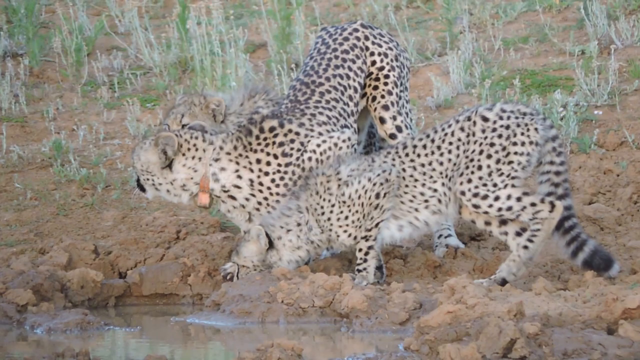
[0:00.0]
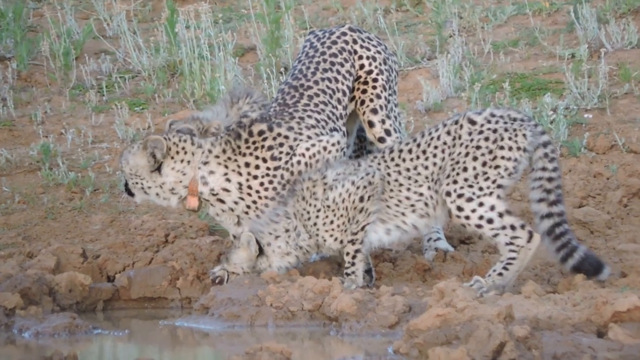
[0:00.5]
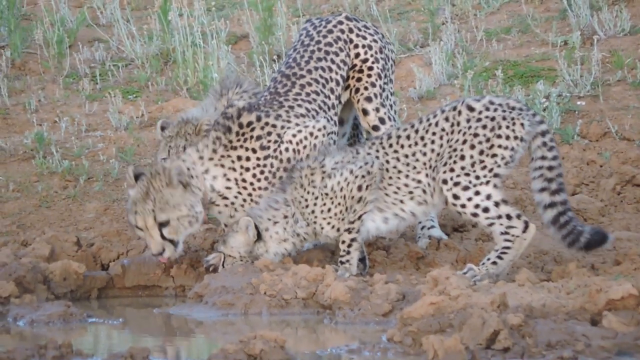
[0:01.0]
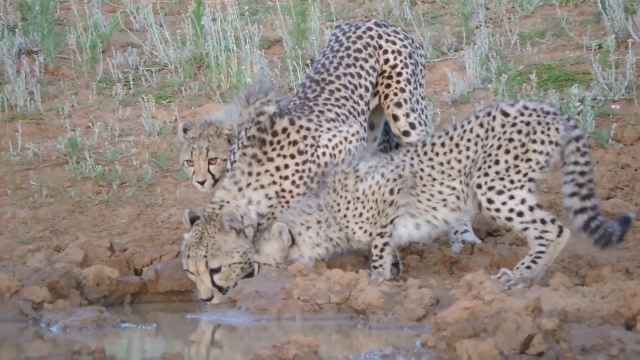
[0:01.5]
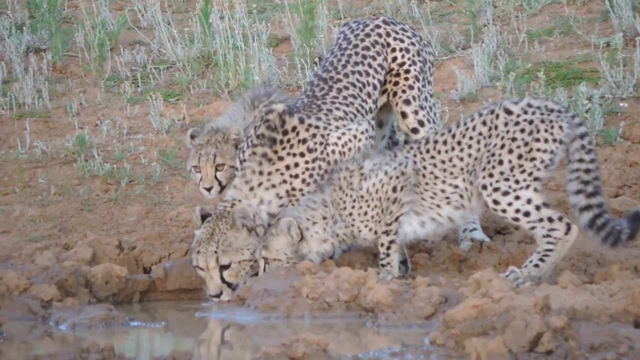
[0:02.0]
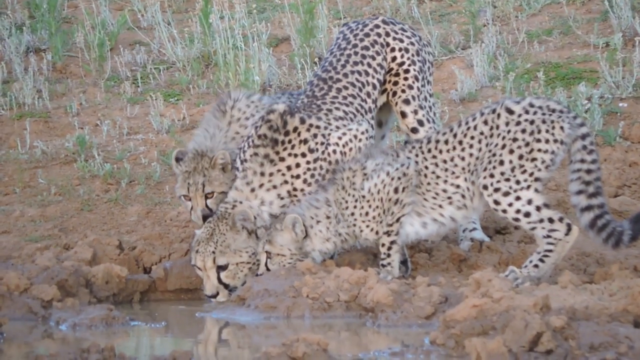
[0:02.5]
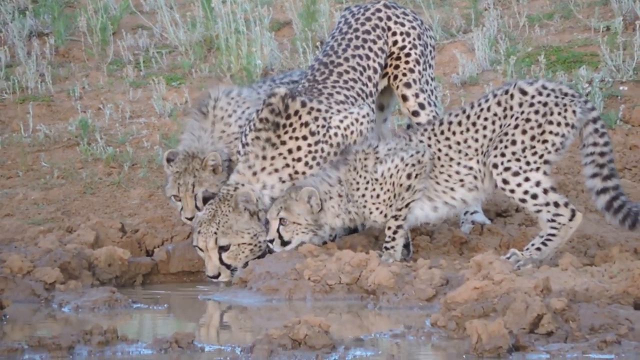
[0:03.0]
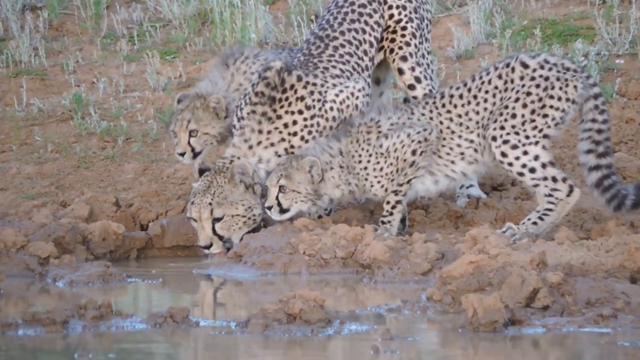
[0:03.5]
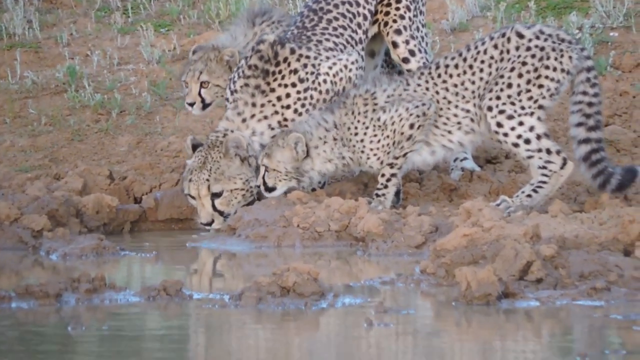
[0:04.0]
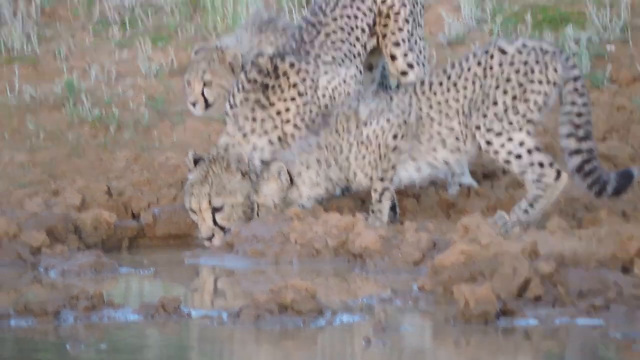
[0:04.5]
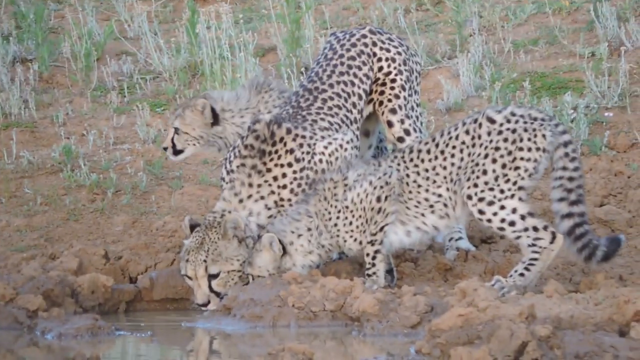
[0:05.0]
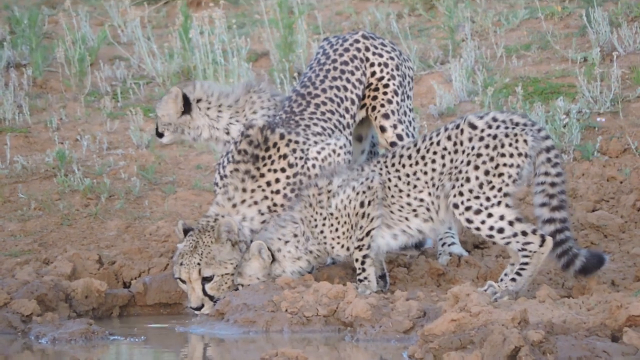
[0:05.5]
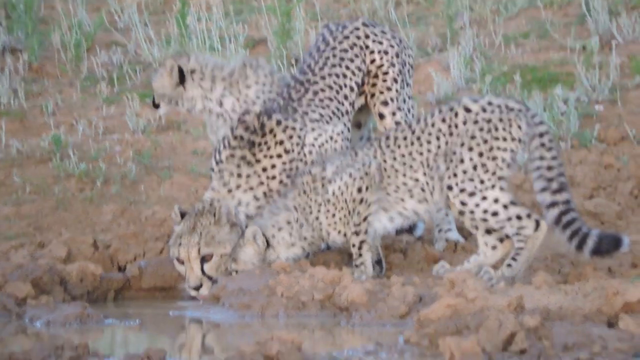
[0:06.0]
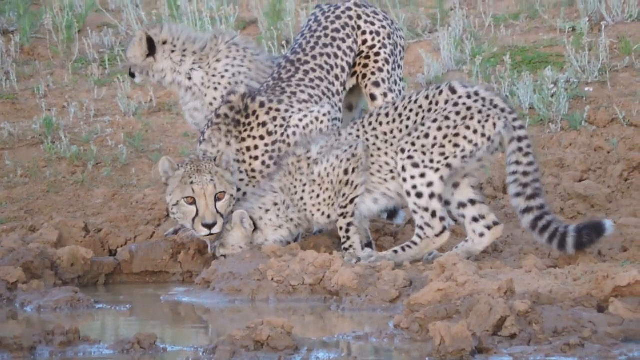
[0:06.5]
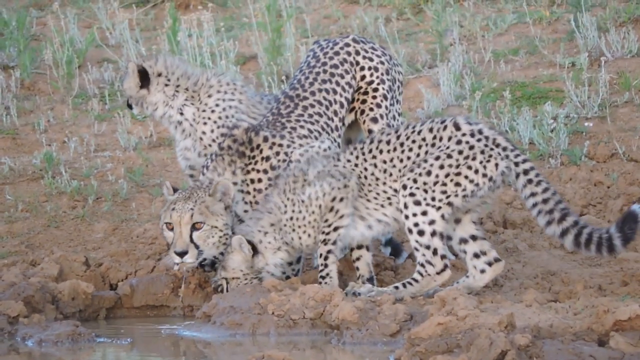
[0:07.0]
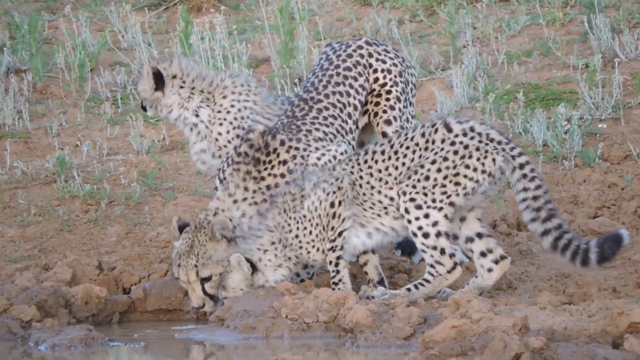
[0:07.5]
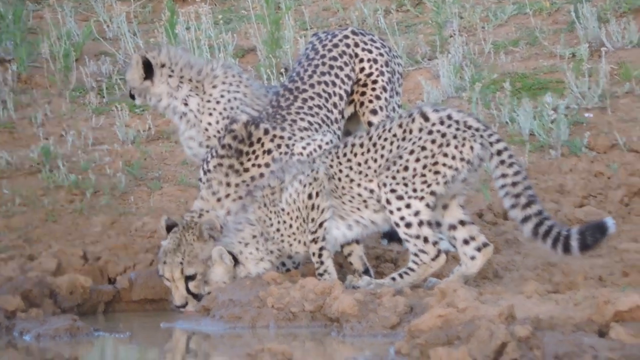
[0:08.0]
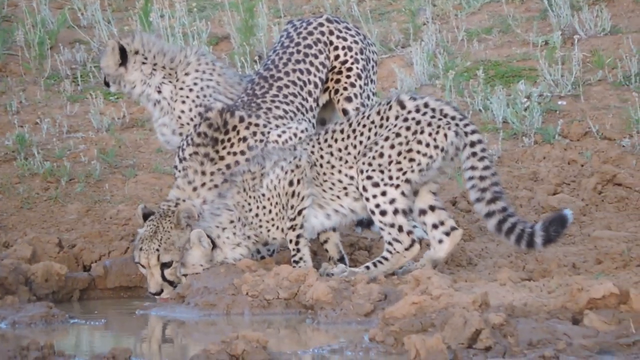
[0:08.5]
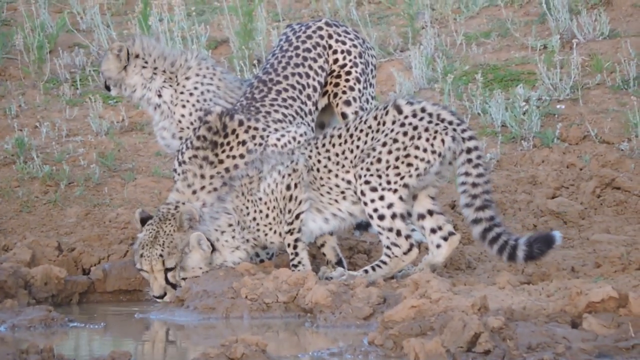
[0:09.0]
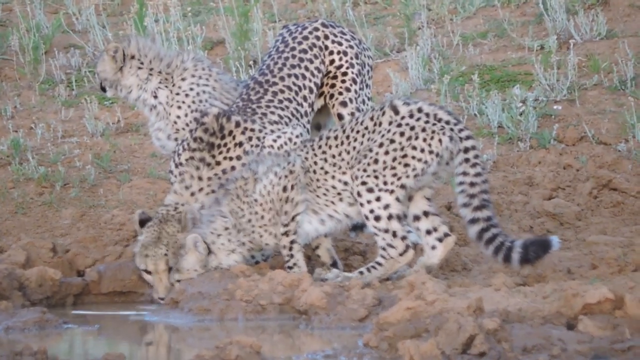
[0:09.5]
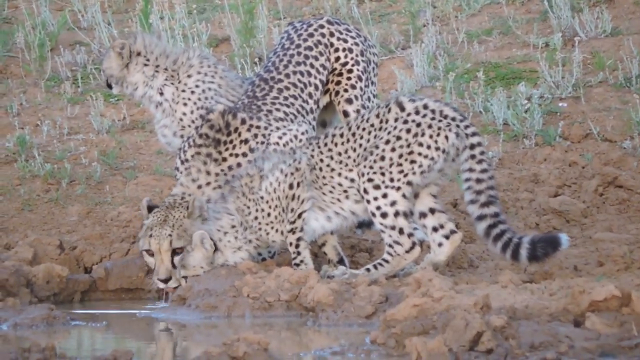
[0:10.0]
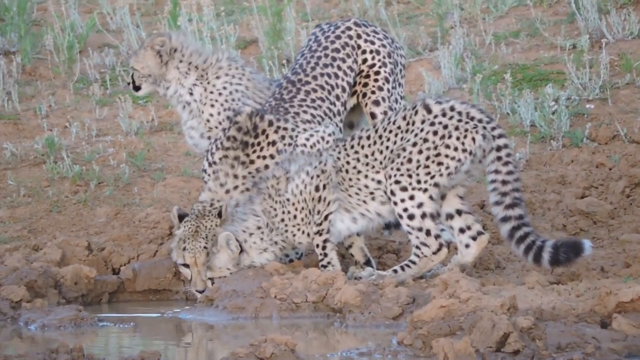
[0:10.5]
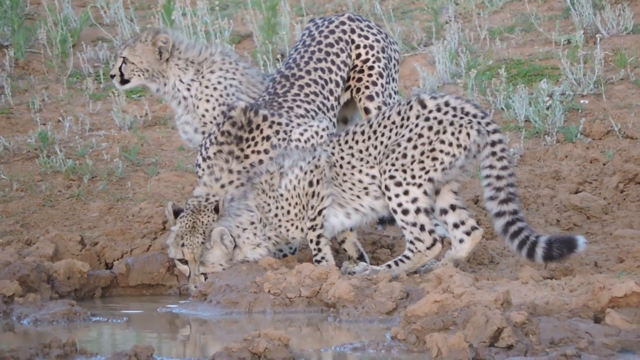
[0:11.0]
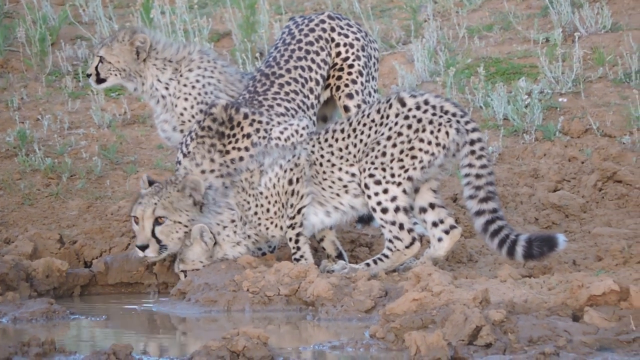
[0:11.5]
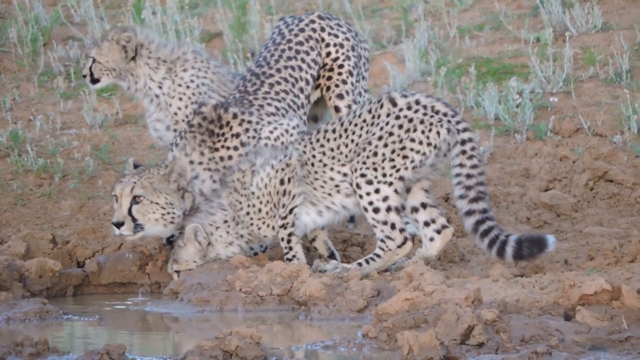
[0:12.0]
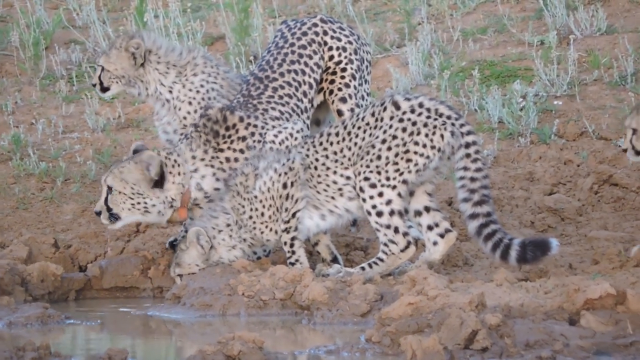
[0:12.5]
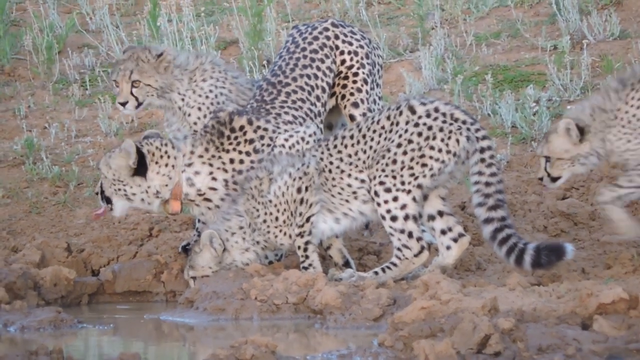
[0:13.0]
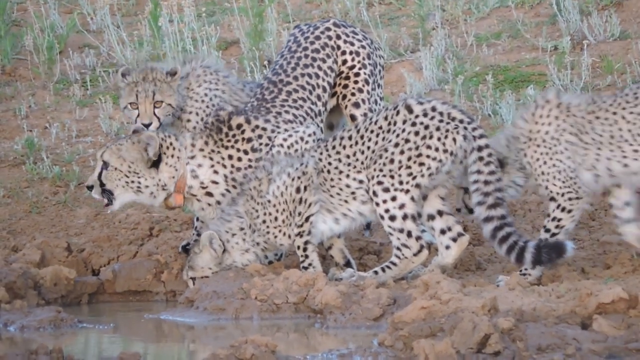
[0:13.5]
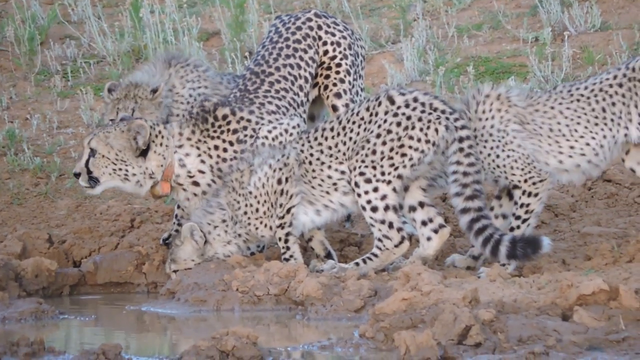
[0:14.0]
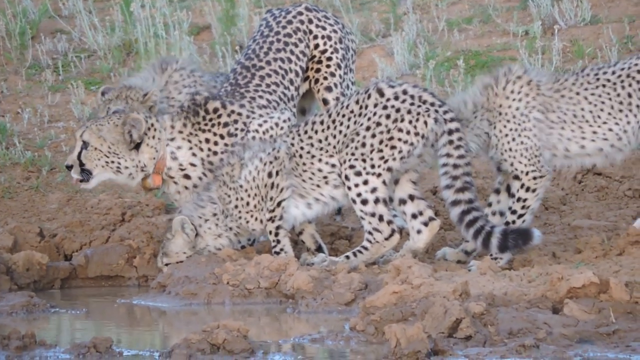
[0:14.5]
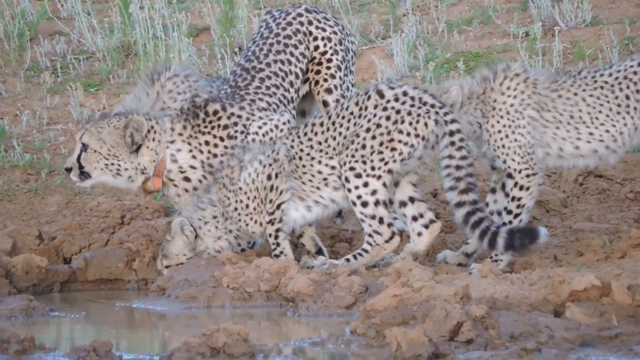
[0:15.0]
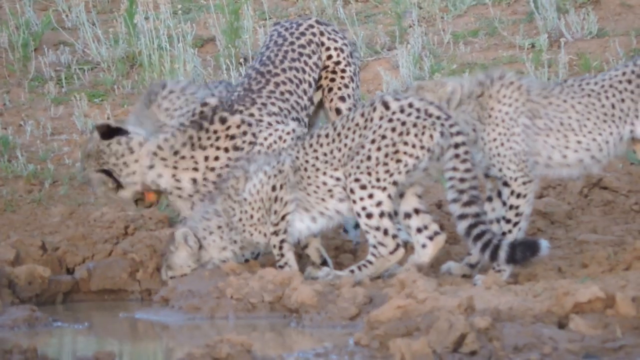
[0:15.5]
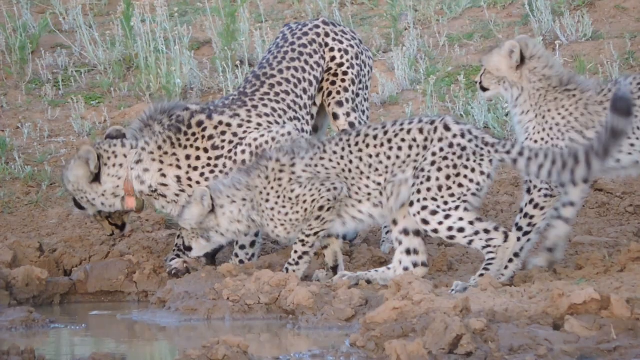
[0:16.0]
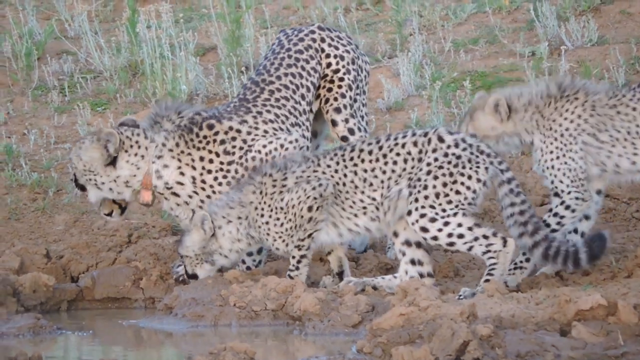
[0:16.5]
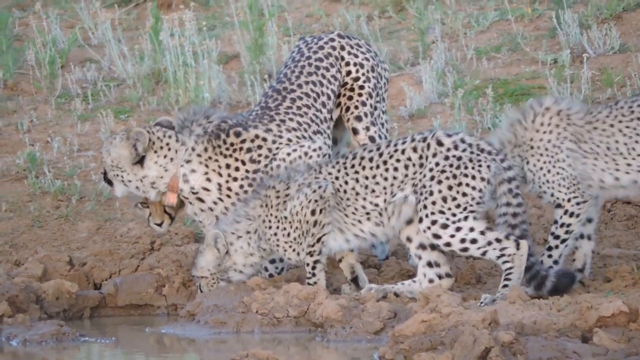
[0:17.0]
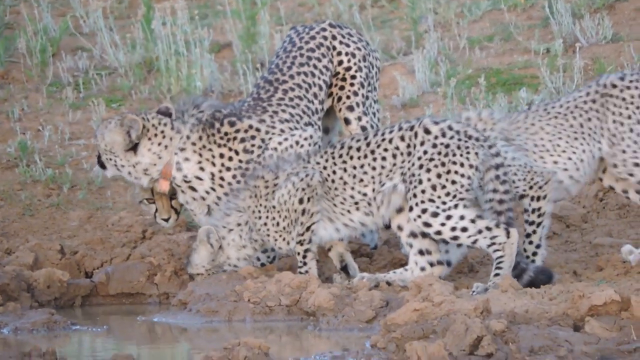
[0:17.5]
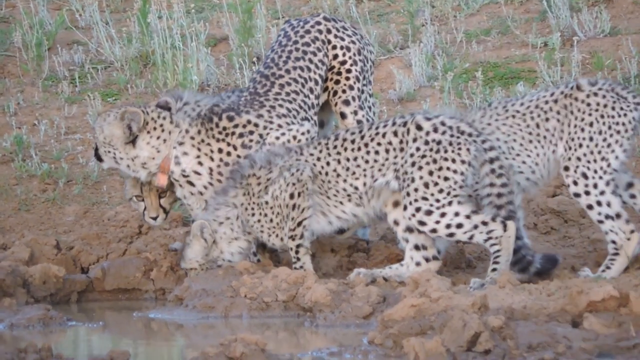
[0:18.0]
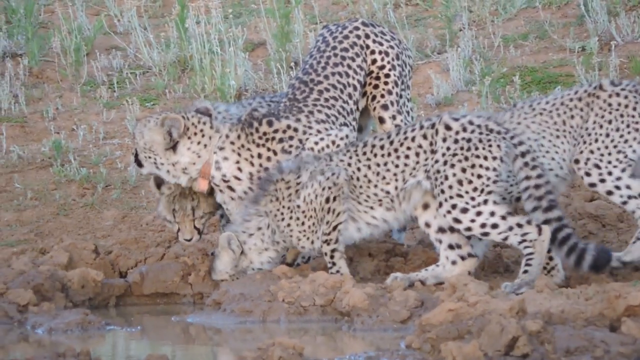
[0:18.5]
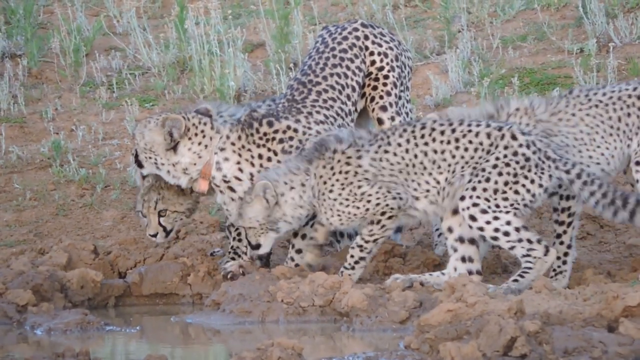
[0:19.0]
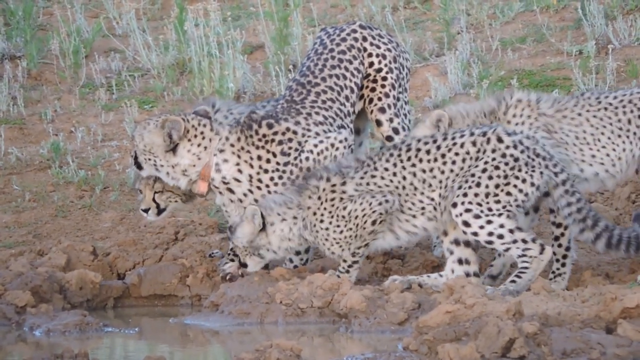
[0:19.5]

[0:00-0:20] Three animals, apparently either cheetahs or leopards, are at a water source on the lower left side. The one on the left keeps looking towards its right, and it is the first to do so, while the other two stay bent down, still drinking. Another one then comes in from behind them on the right side, and they all jump back. The one in the middle has a collar, apparently a tag, and it also looks towards that side. The shot ends with the collared one looking towards the left side, as the one on the left was initially doing on its own.